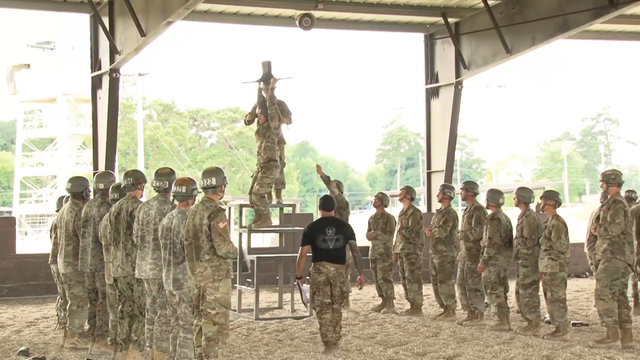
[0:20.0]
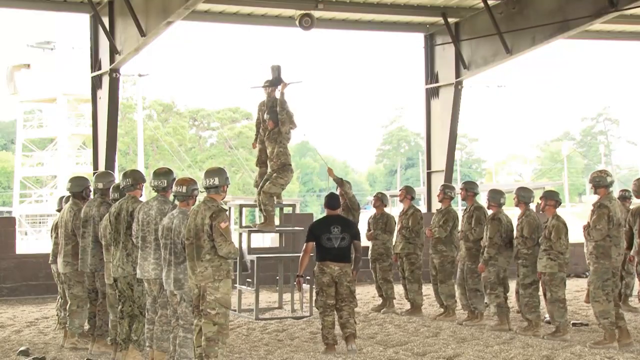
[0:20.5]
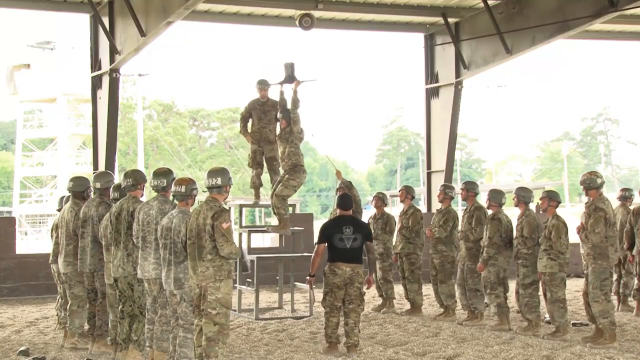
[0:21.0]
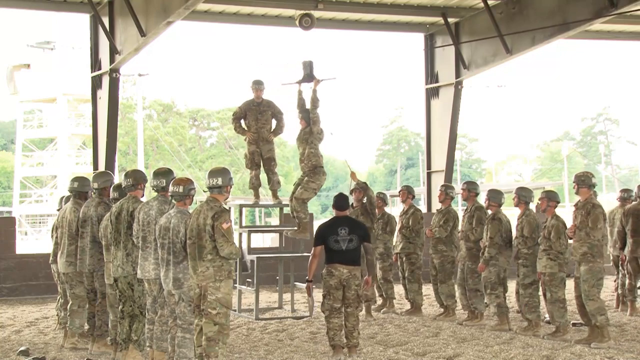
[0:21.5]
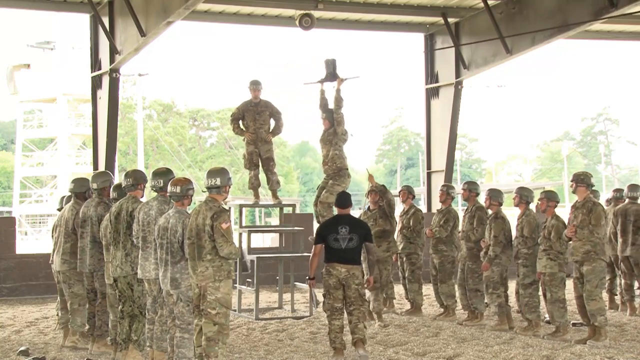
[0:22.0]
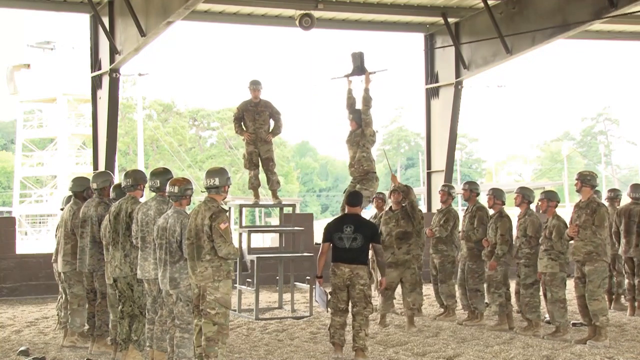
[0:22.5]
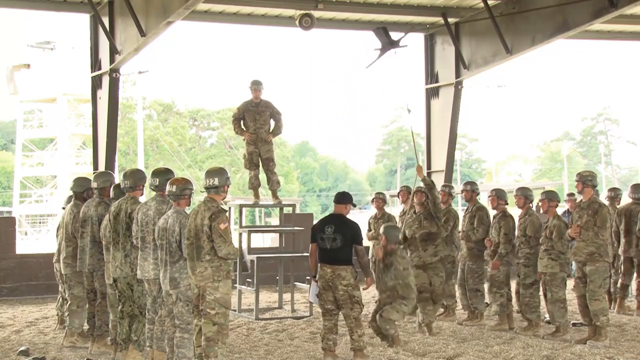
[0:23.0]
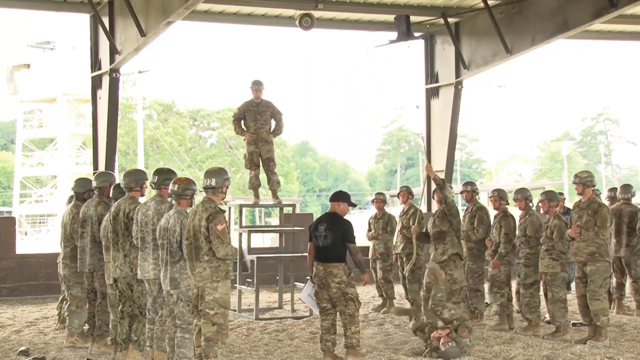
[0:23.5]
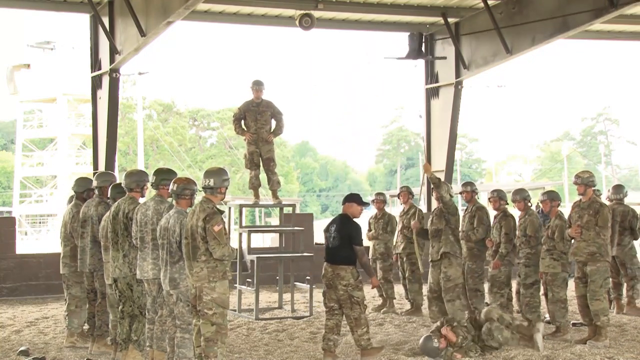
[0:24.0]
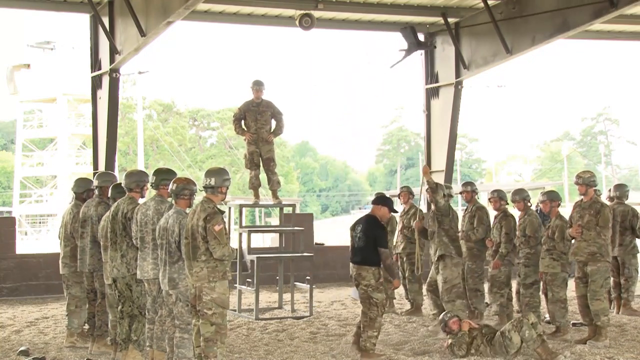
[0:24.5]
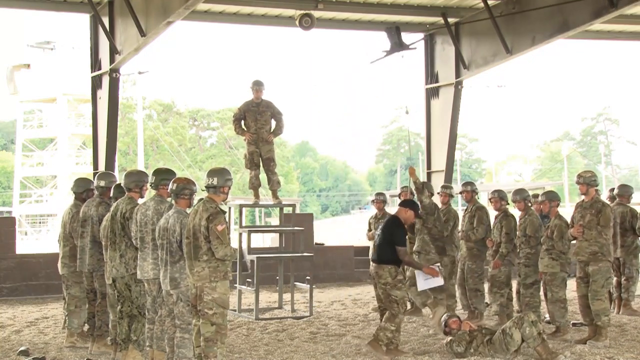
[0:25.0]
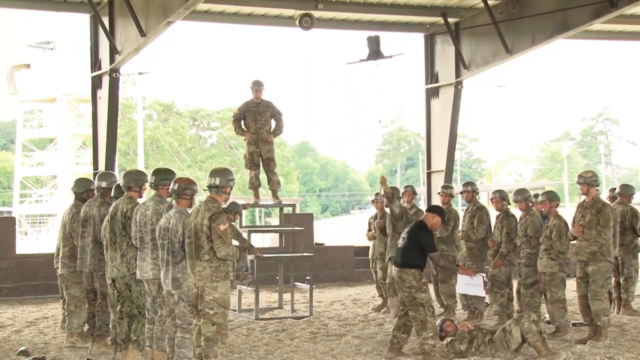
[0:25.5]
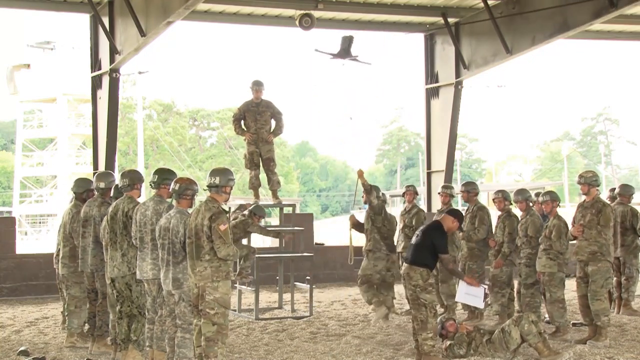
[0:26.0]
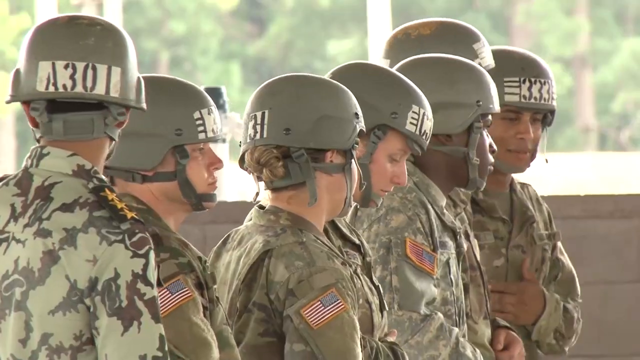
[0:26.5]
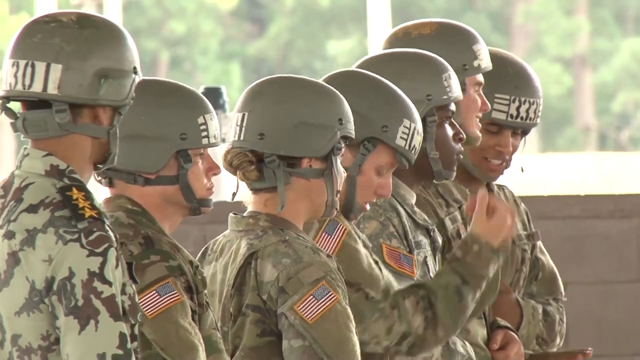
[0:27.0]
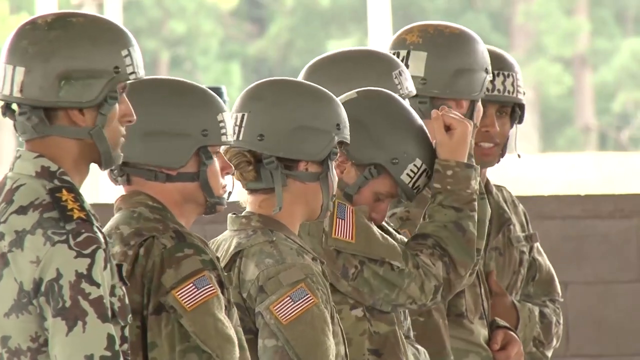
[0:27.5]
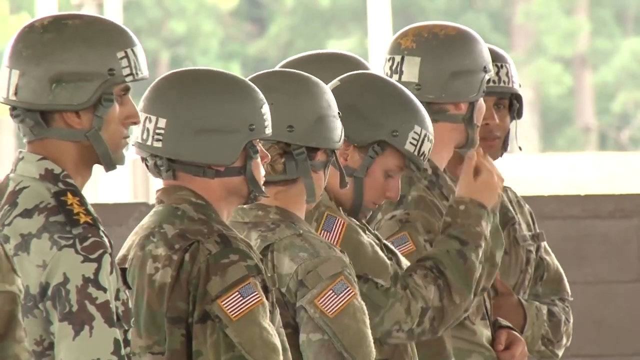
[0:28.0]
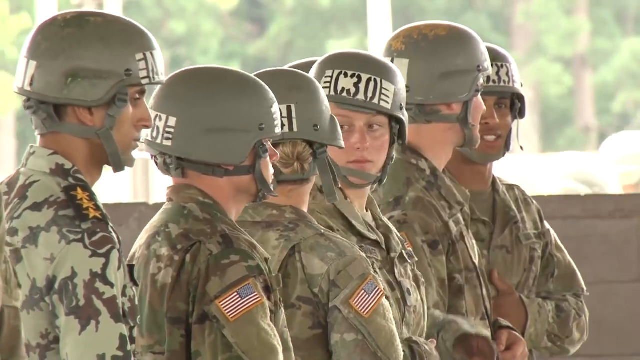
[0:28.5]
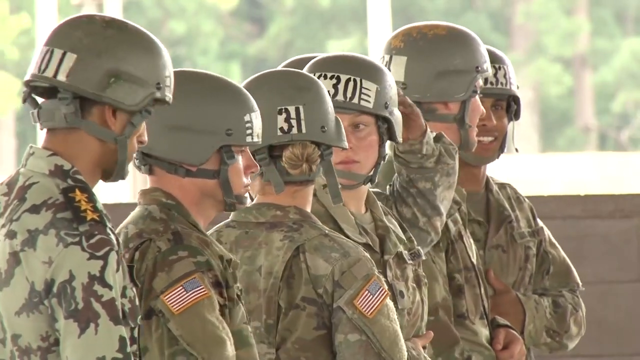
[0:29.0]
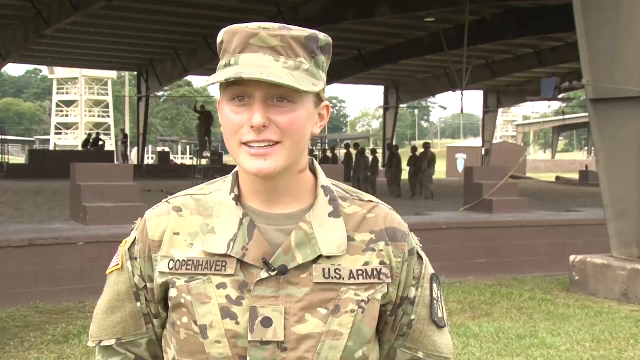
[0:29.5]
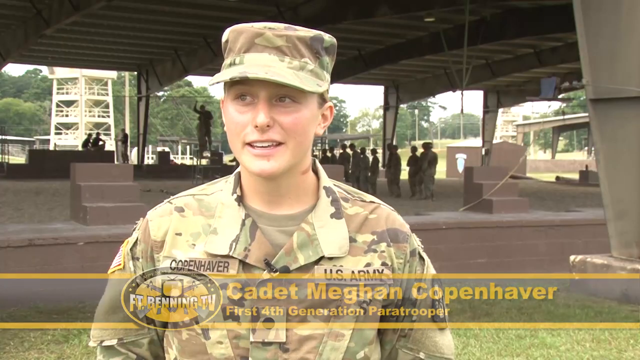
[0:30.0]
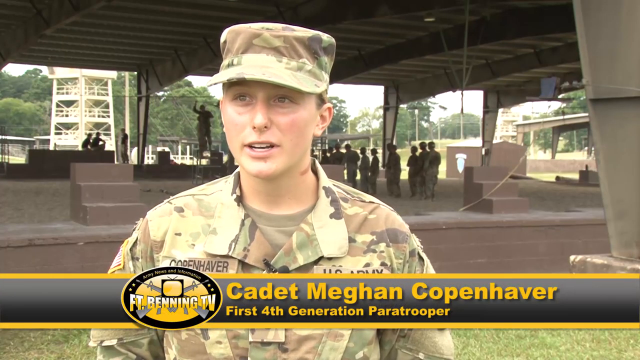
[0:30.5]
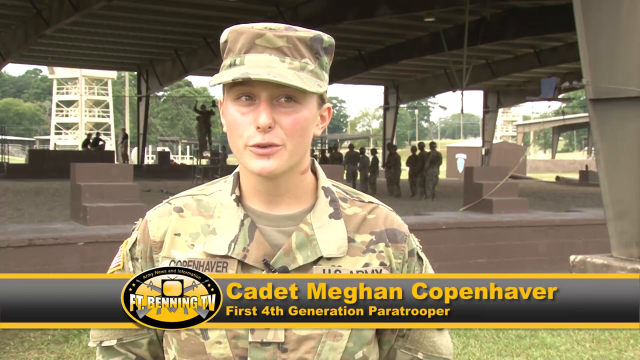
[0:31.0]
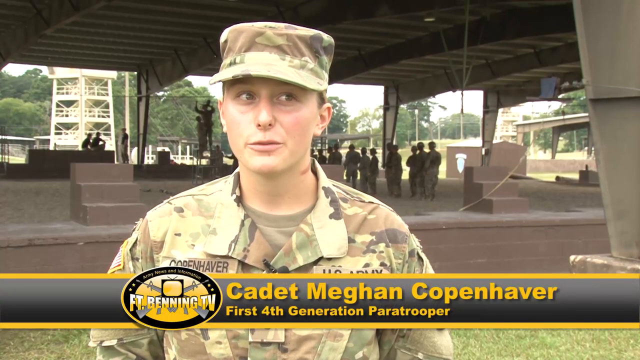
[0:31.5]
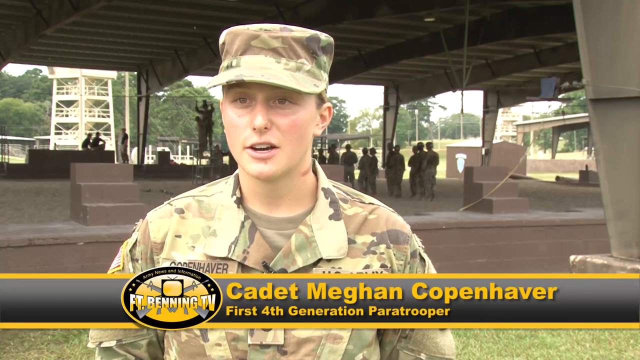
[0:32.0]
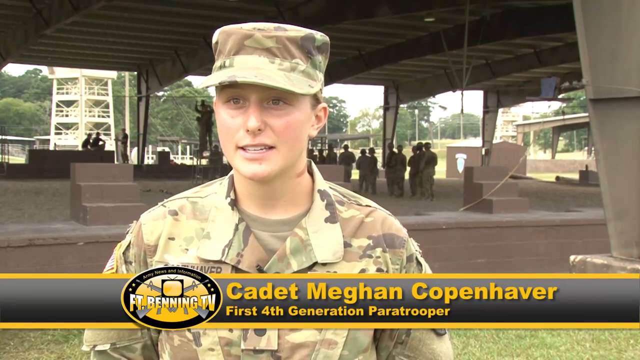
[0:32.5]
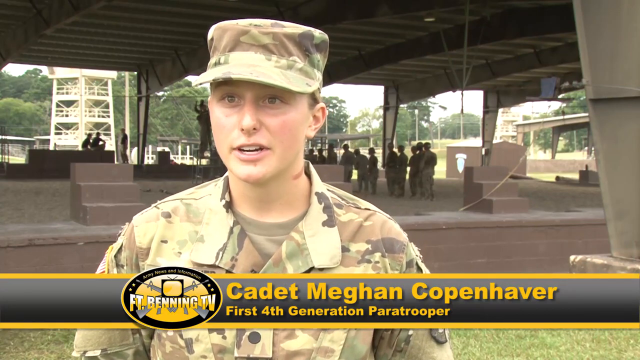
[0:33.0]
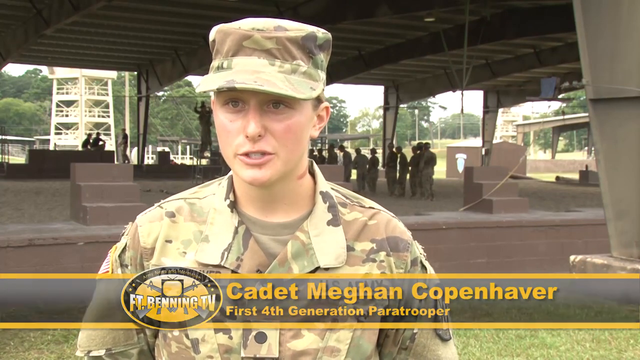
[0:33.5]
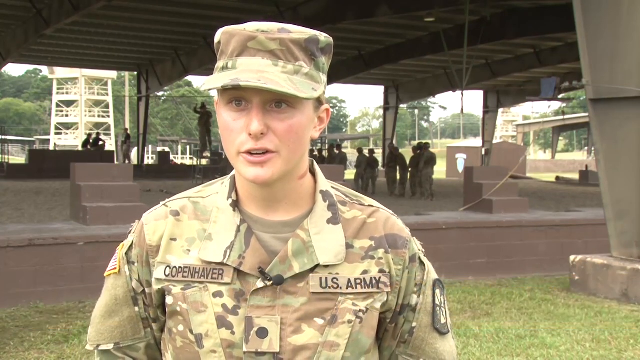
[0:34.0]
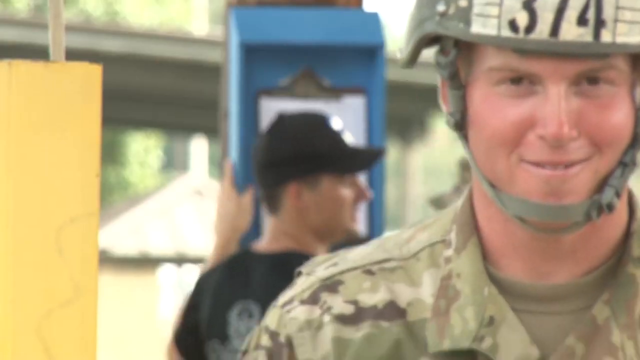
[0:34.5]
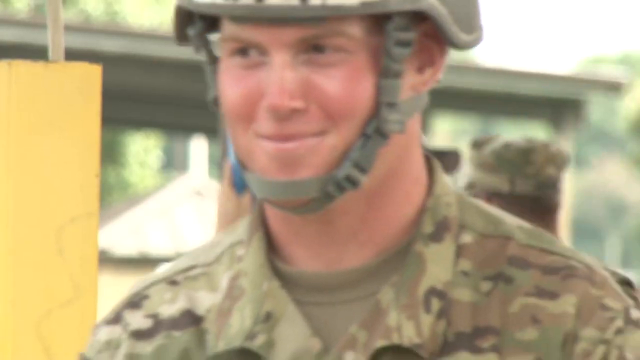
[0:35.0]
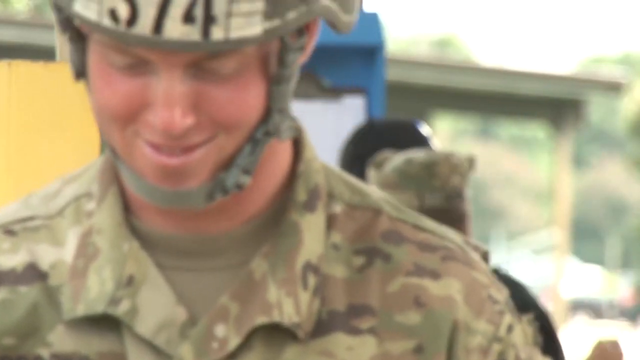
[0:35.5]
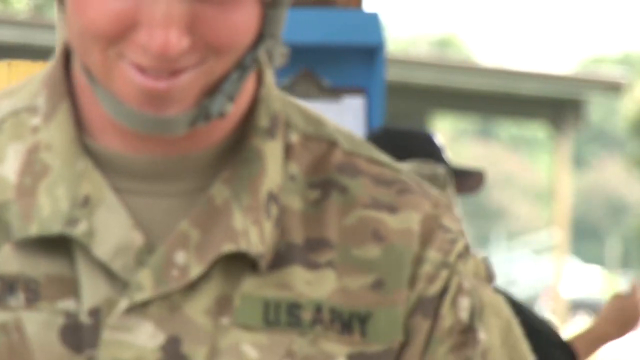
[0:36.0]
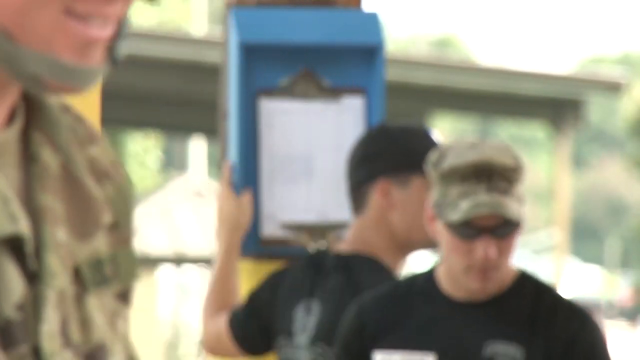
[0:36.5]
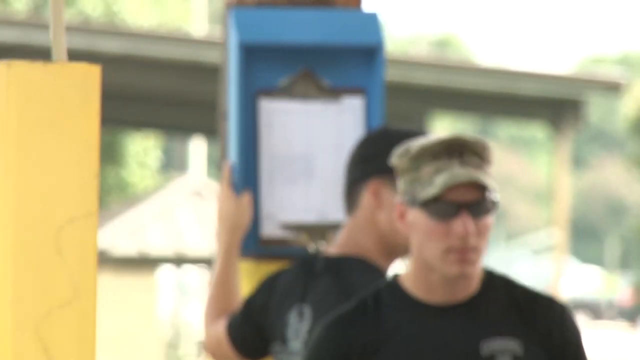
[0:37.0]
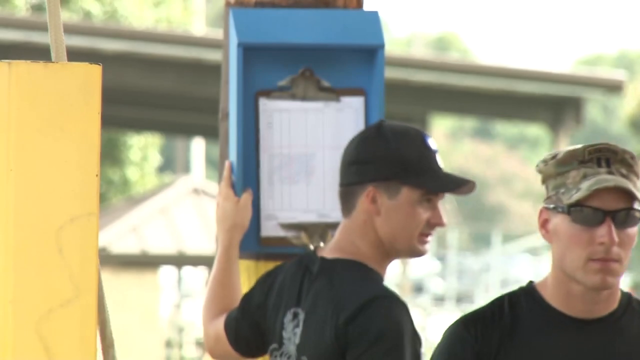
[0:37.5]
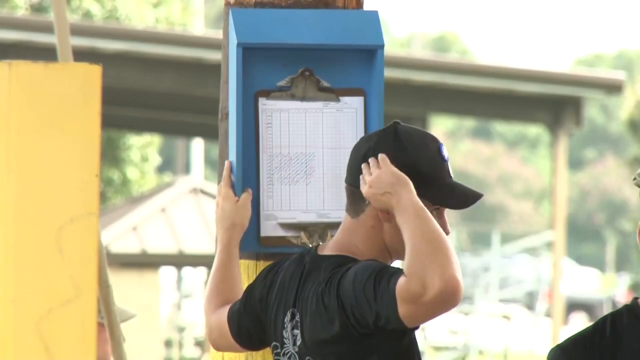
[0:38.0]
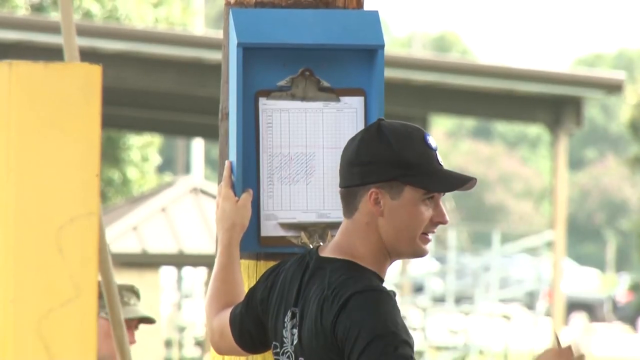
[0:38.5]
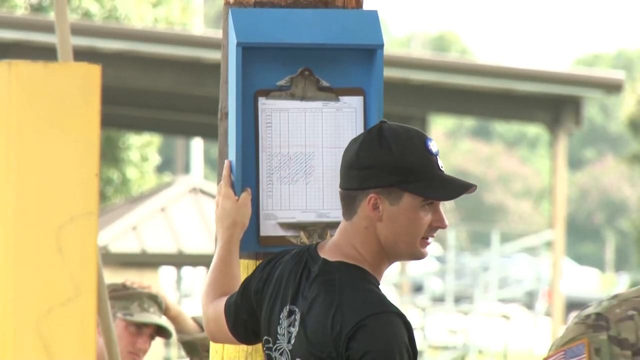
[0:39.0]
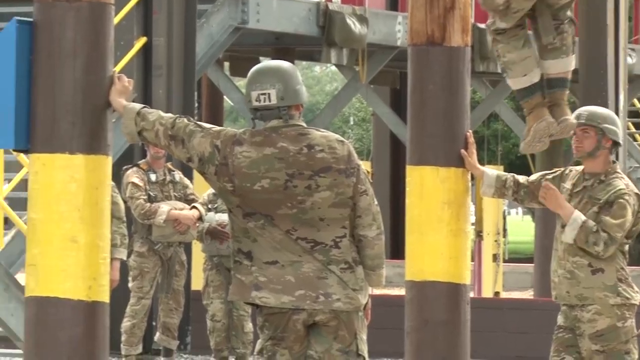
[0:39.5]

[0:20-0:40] Soldiers are lined up side by side, shoulder to shoulder, in camo pants and shirts, with hard hats or protective helmets on their heads. One row is on the left side of the frame and the other row is on the right side. There is a man in a short-sleeved black t-shirt. Another soldier wears a camo shirt with an OD green t-shirt underneath and a camouflaged cover or cap. This soldier is a woman with her hair put up, apparently underneath or behind the hat; she looks kind of androgynous. Yellow text at the bottom reads "Cadet Megan Copenhaver, first fourth generation paratrooper." She is talking to somebody off screen.